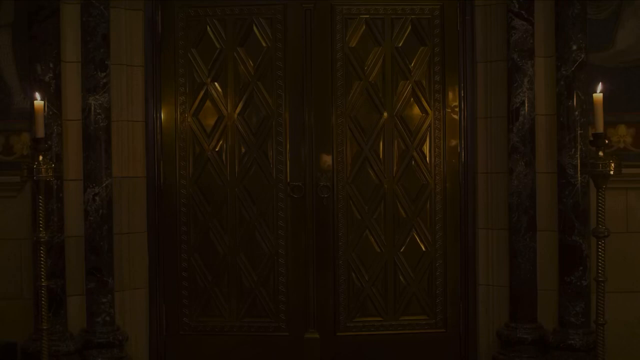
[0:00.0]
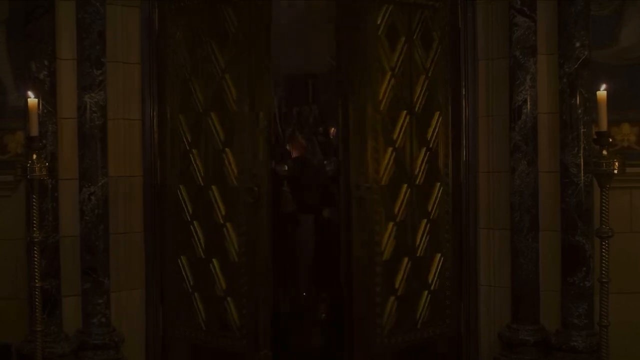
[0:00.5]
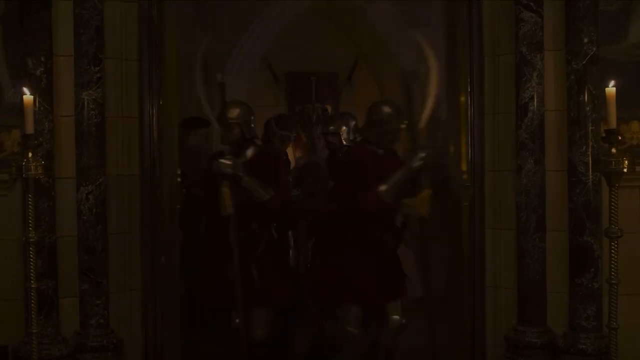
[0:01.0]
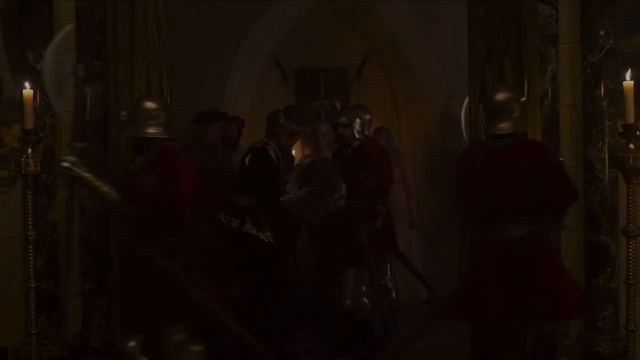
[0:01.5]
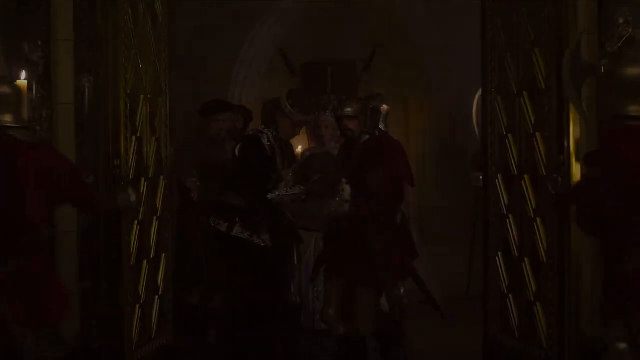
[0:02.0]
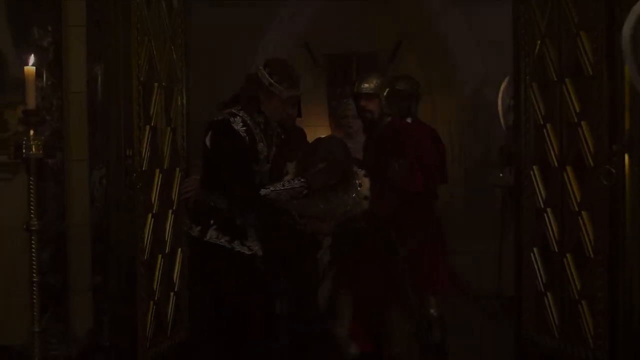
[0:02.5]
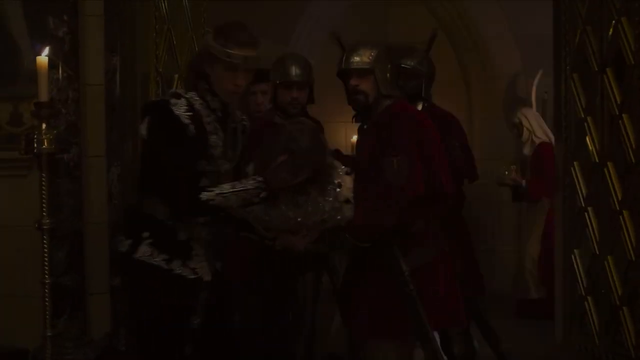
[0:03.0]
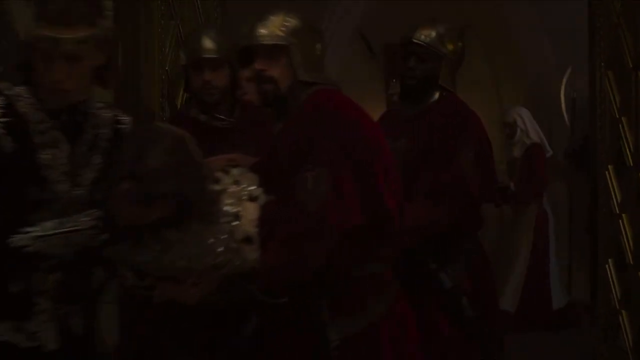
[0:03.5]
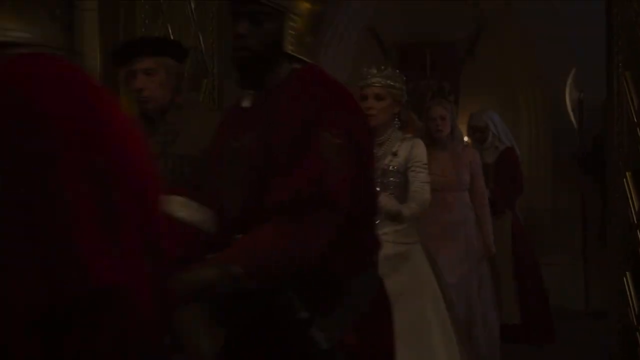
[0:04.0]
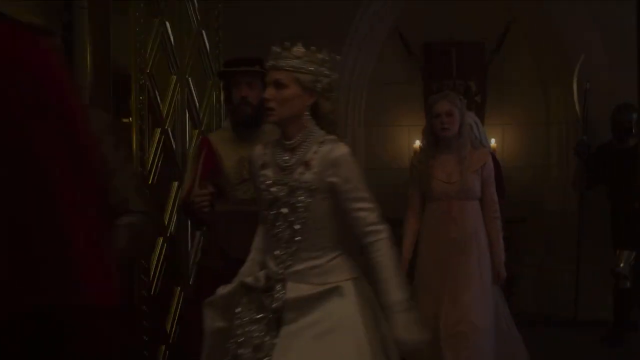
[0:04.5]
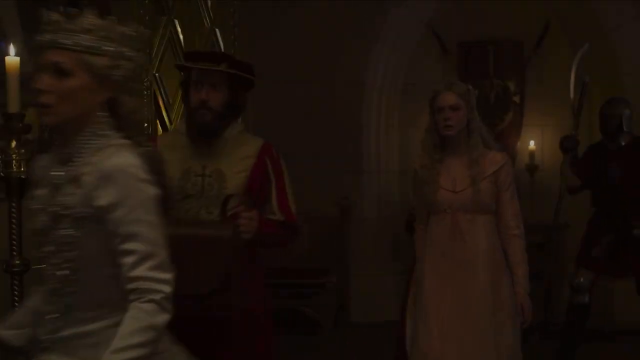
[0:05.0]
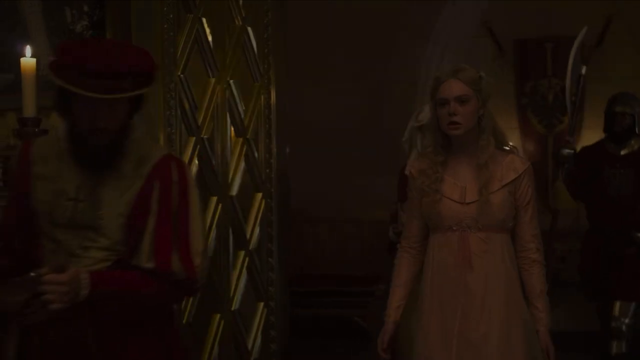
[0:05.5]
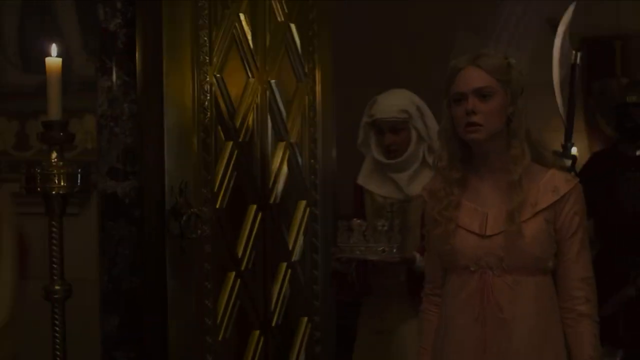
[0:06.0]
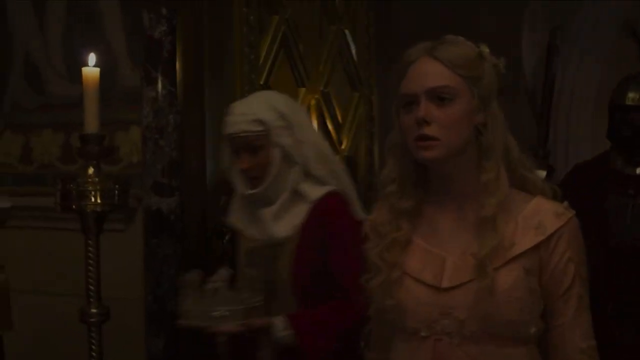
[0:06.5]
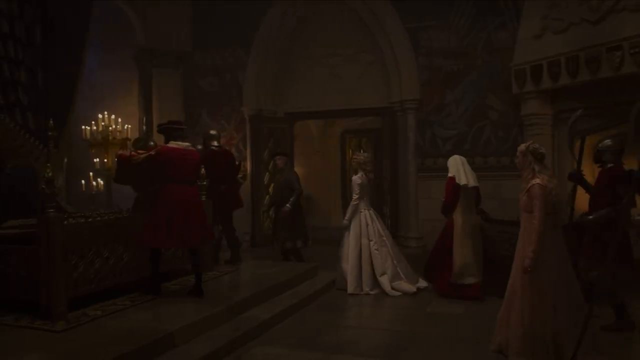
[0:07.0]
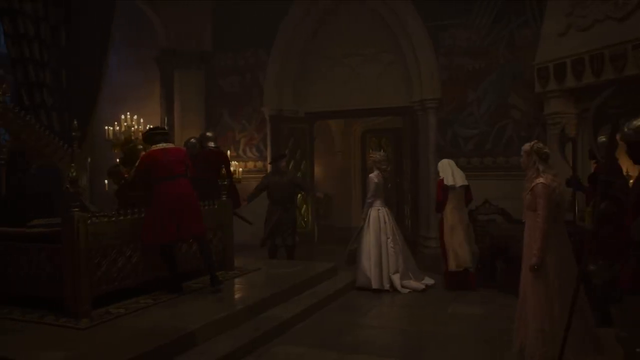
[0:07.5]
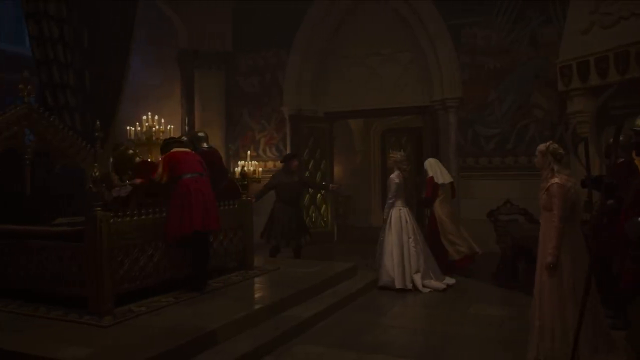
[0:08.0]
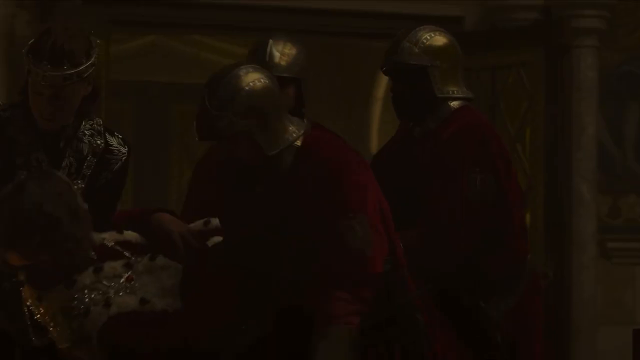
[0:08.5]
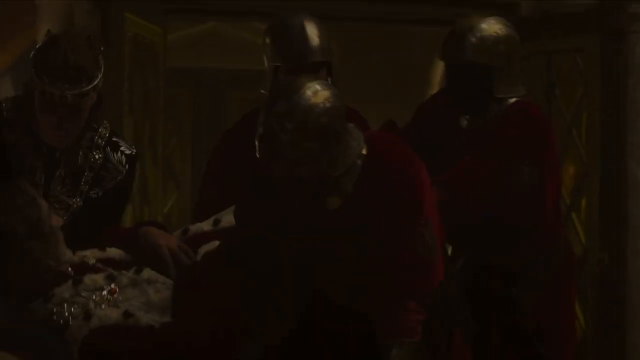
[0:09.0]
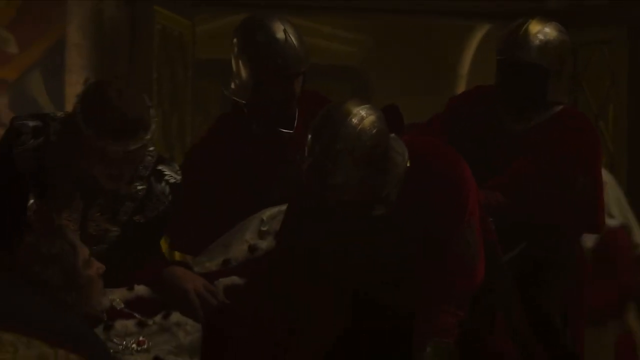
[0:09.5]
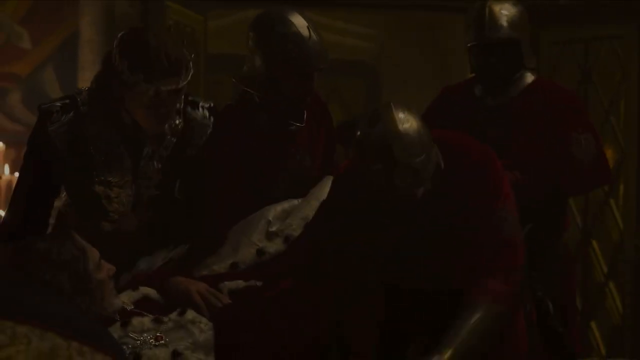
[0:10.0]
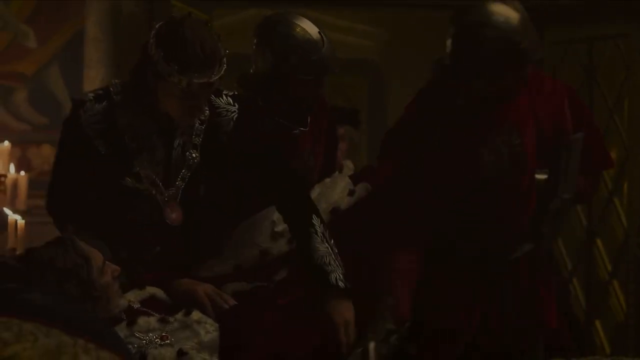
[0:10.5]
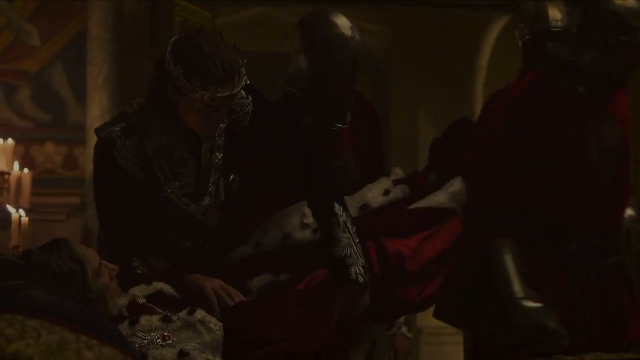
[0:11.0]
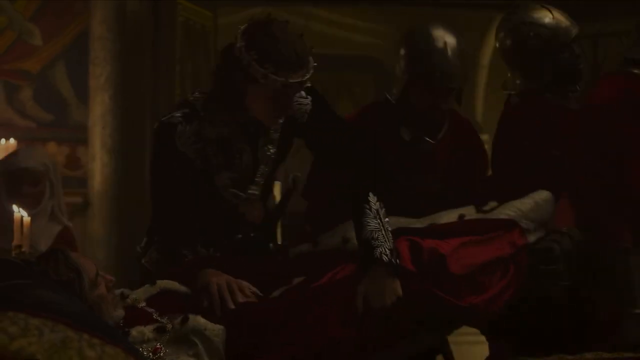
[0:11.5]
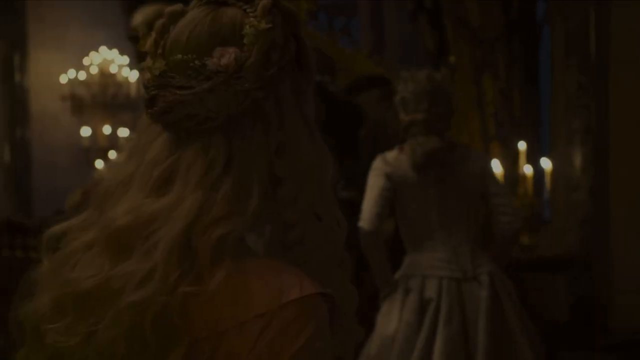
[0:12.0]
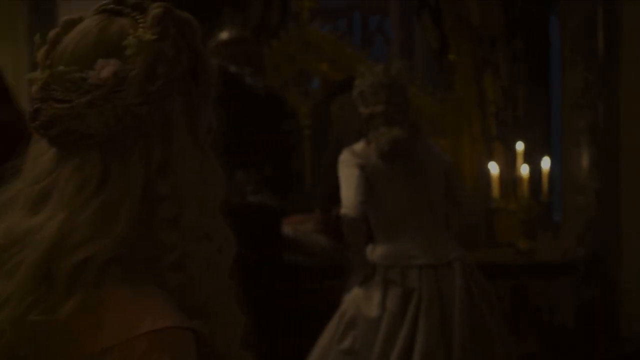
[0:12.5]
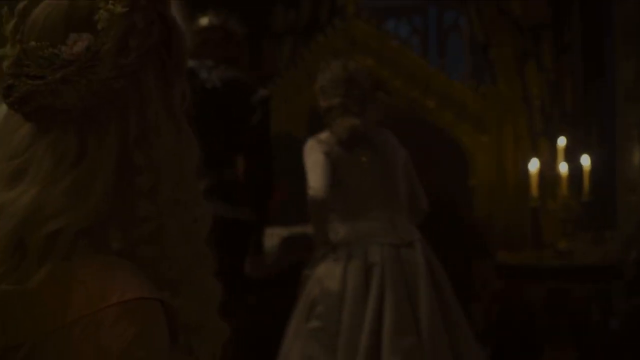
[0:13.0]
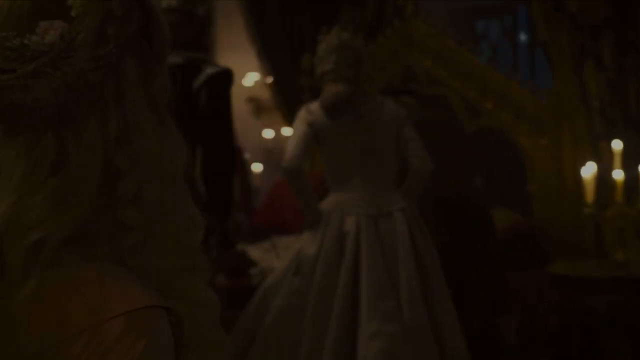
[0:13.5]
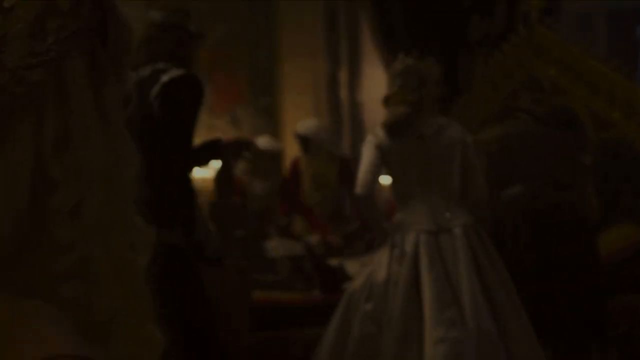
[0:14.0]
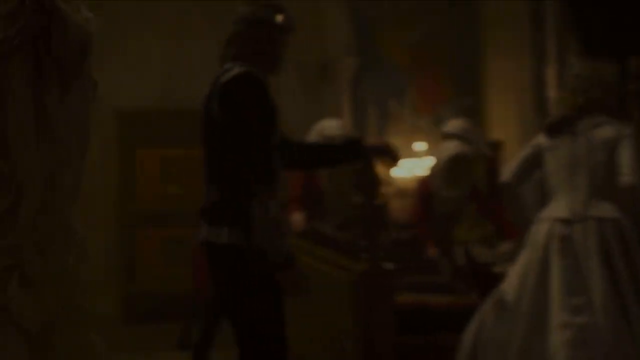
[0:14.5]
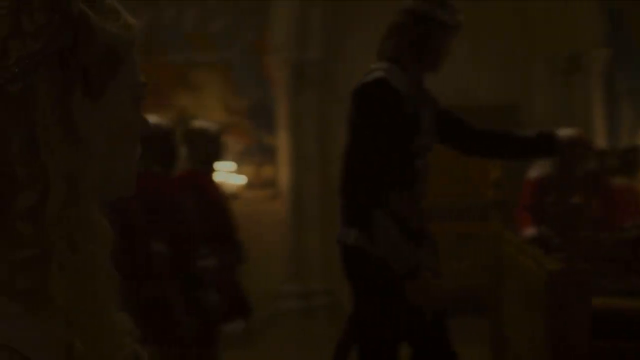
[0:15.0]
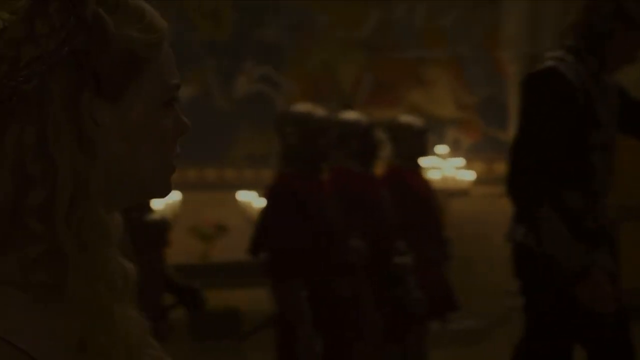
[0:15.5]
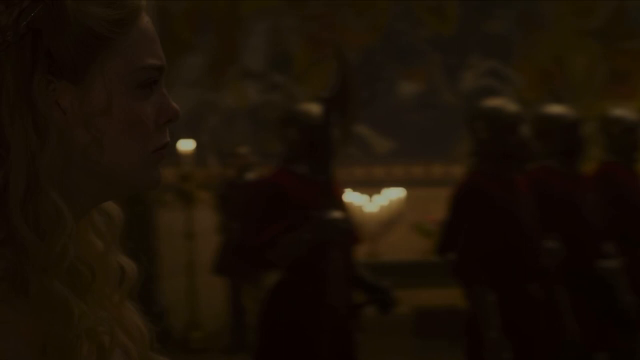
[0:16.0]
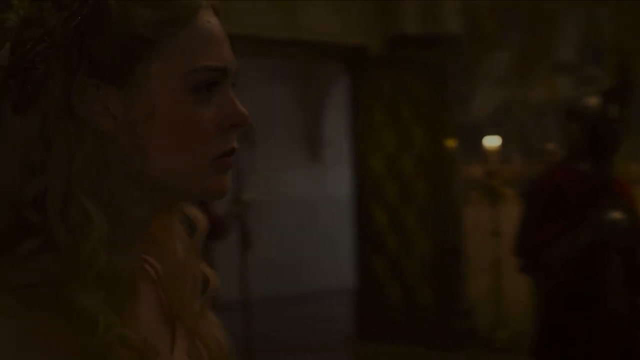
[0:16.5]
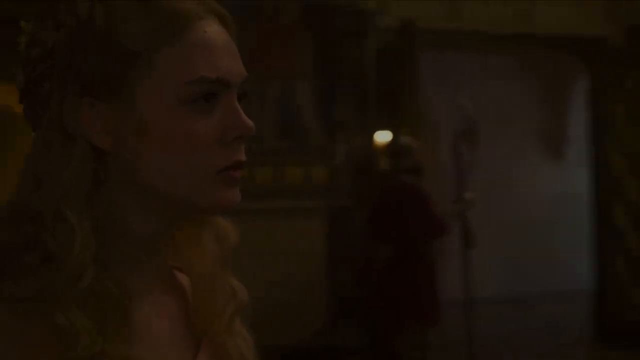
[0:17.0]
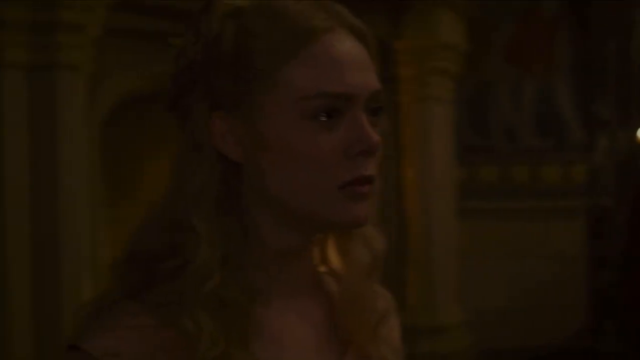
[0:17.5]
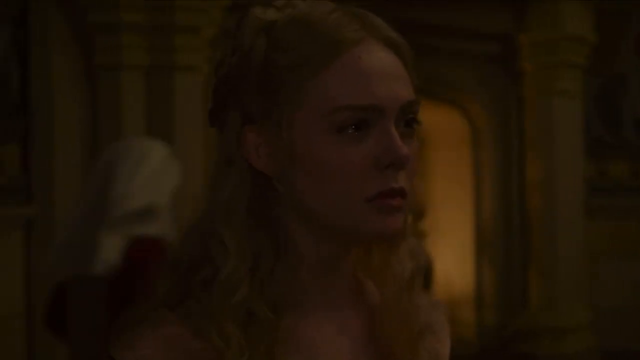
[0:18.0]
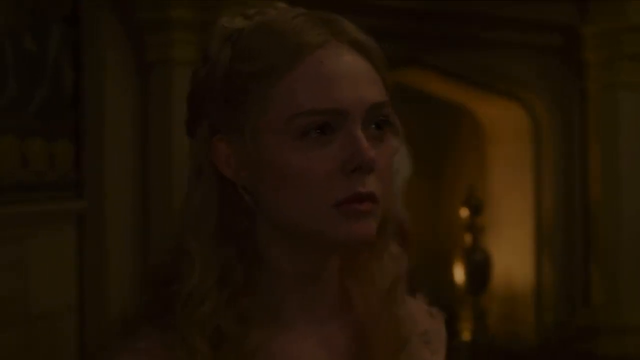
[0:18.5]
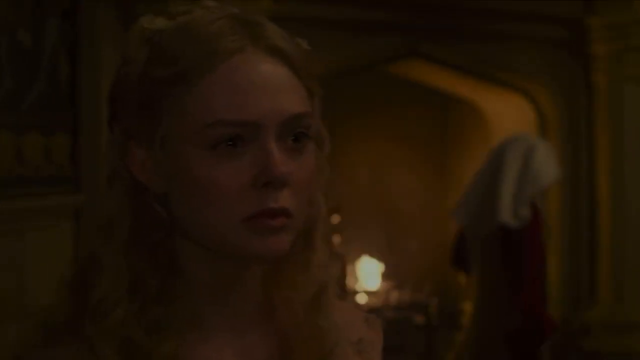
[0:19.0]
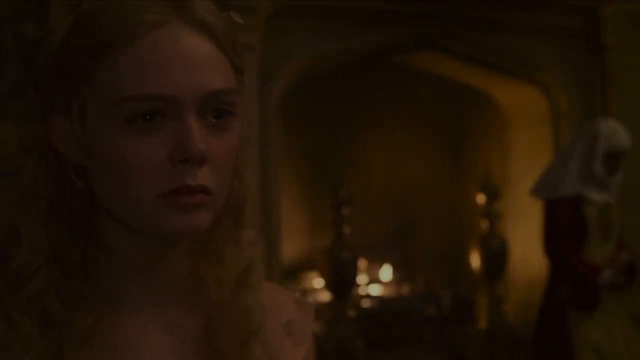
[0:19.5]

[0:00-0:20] An armoured man carries an injured king, who has been shot or injured in a war or battle. The women around him look very worried, and one of them is on the verge of tears. The soldiers also look very worried as they carry the king and try to make a path for him. The king is possibly on the verge of death. The women's faces show fear.